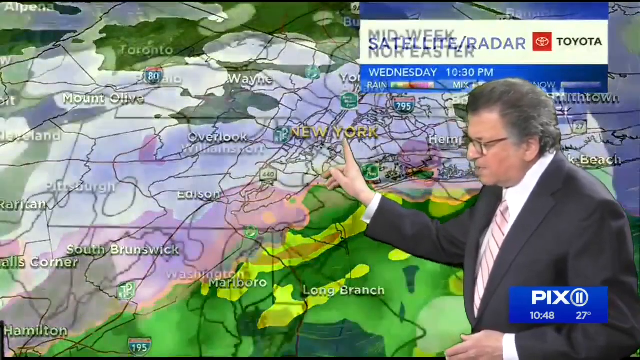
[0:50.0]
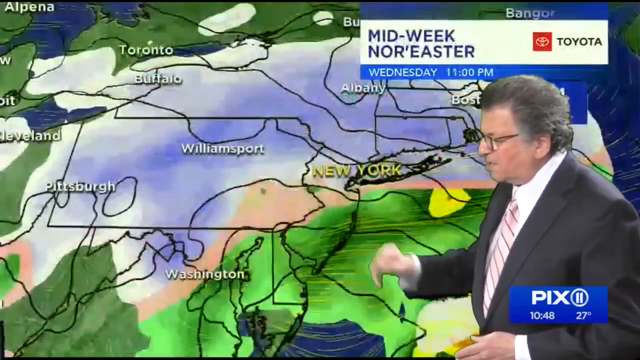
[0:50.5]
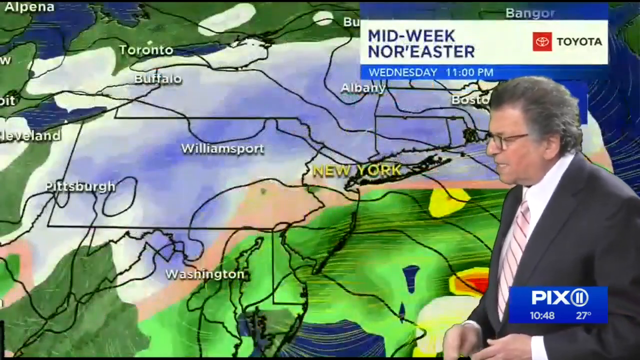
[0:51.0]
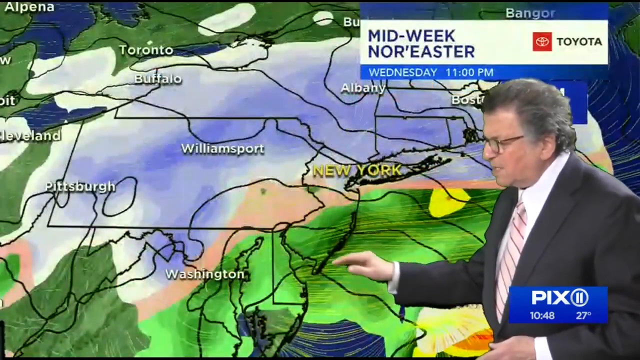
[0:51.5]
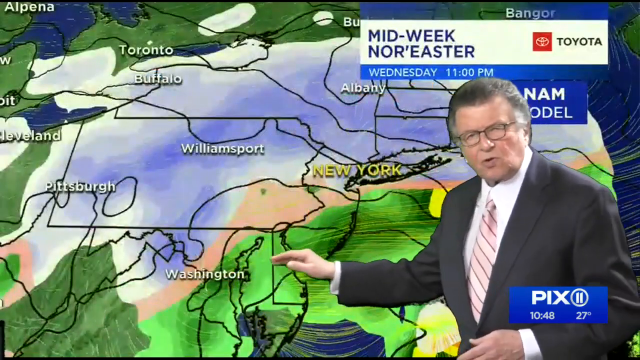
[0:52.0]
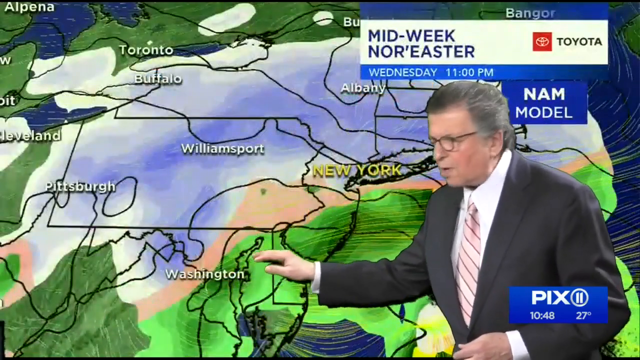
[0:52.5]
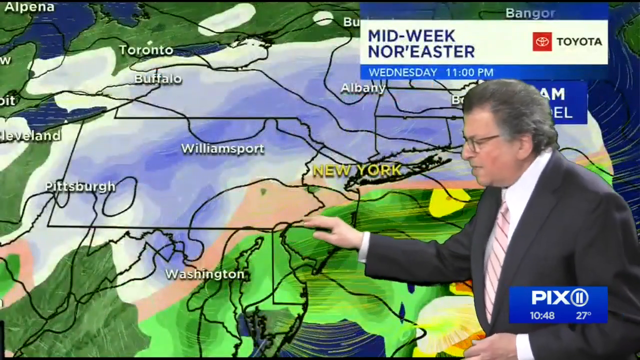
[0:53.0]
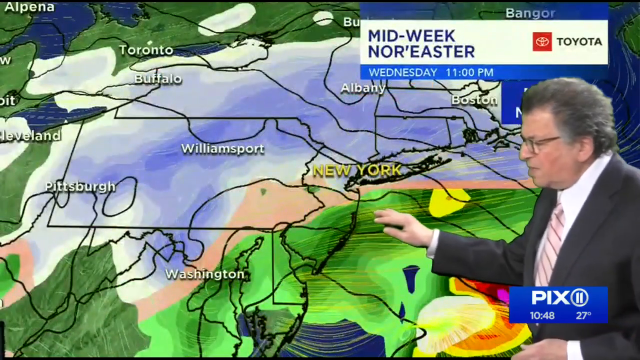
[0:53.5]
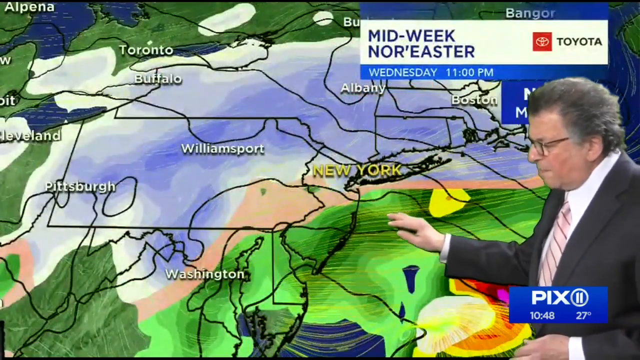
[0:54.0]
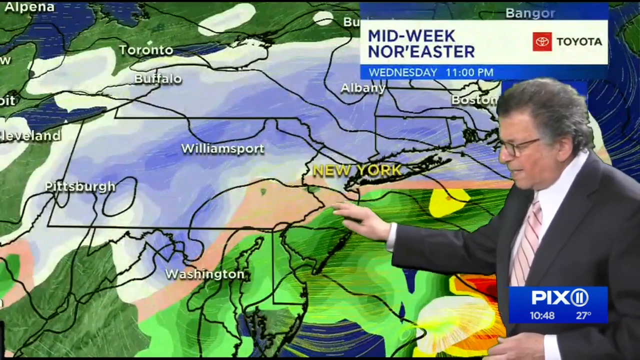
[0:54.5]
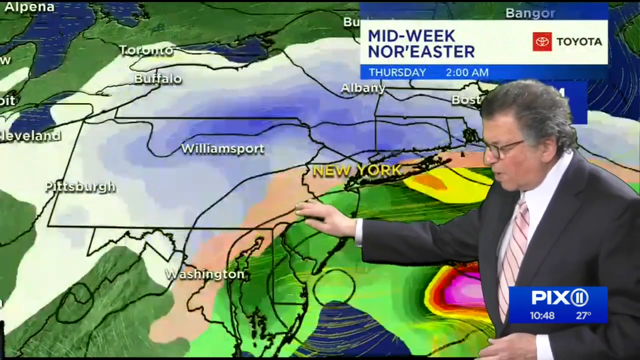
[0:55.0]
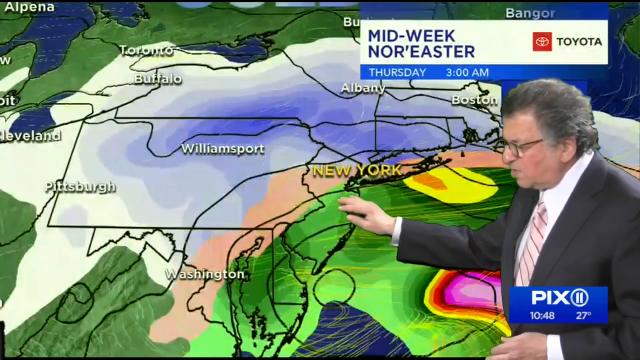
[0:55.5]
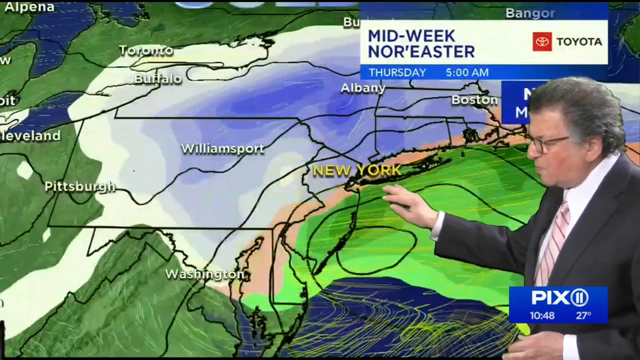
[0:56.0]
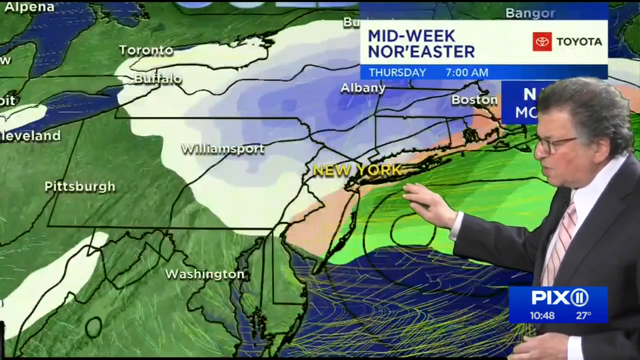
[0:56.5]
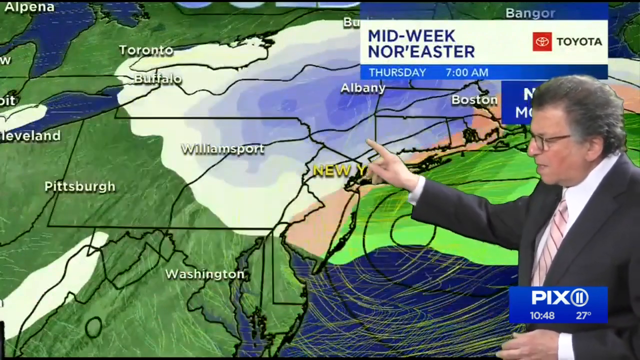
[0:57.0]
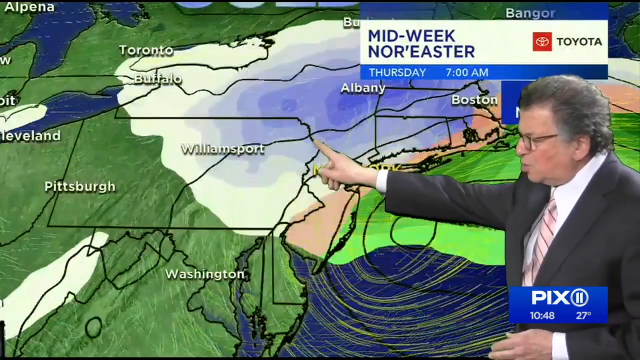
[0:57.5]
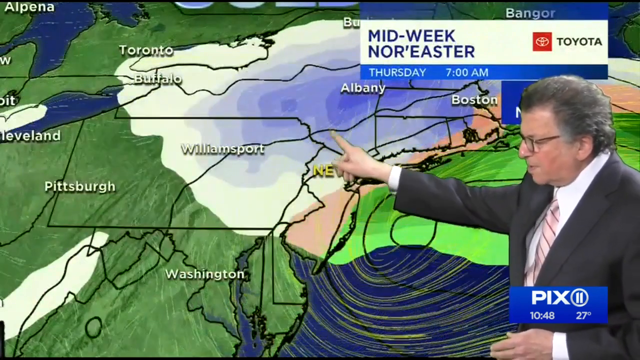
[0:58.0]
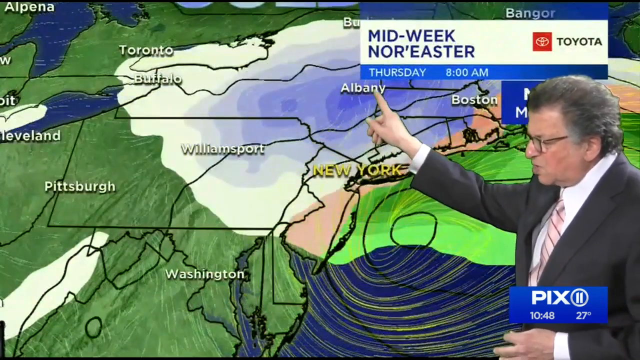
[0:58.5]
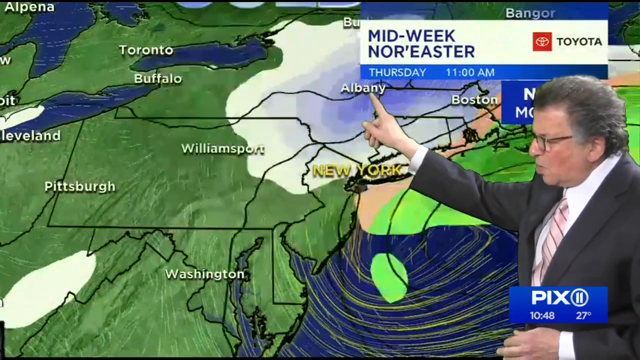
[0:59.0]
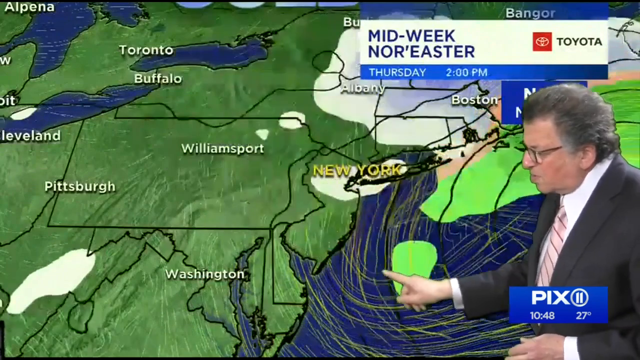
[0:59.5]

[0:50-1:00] The man zooms in on the Williamsport area. Green on the map shows rainfall moving from Williamsport up toward upper New York City. Times are shown for the midweek northeastern area: Wednesday 11, Thursday 3 a.m. and Thursday 7 a.m. The rain moves toward Albany and the Boston area and seems to mostly miss New York City while still heading in that direction. Green and beige areas surround the region, with New York in between, and Toronto and Buffalo also appear on the map. Green passes below New York City, and a dark green band goes into New York City. The man moves his hand across the virtual map, pointing up at Albany and down at a smaller green circle.